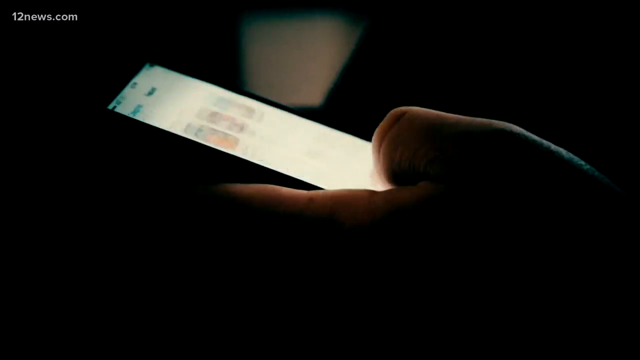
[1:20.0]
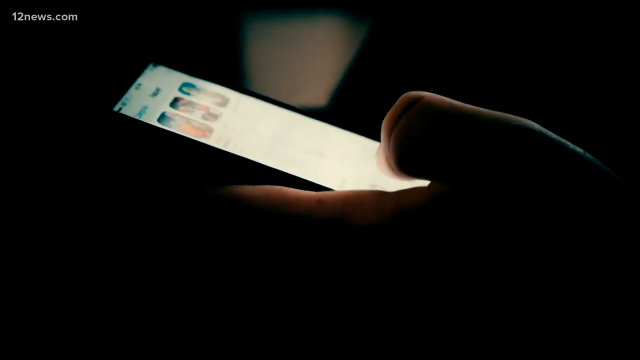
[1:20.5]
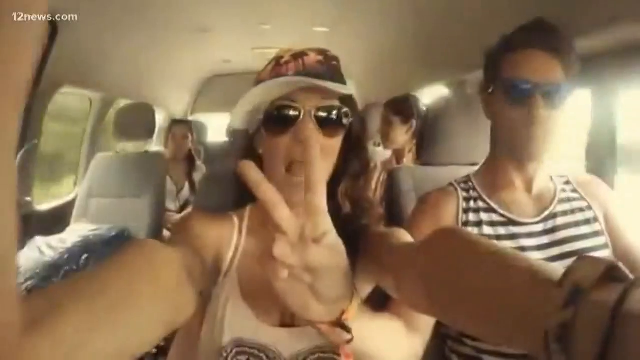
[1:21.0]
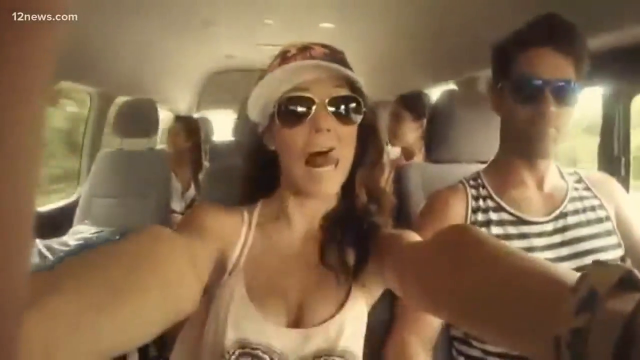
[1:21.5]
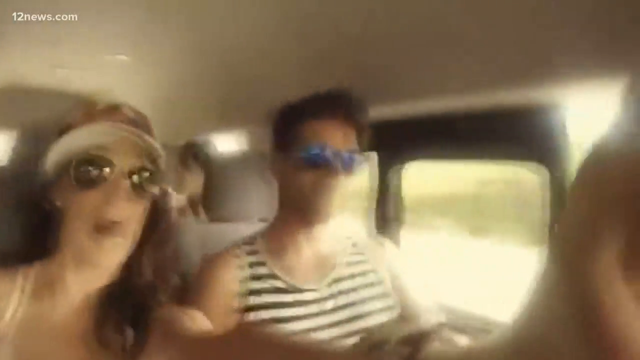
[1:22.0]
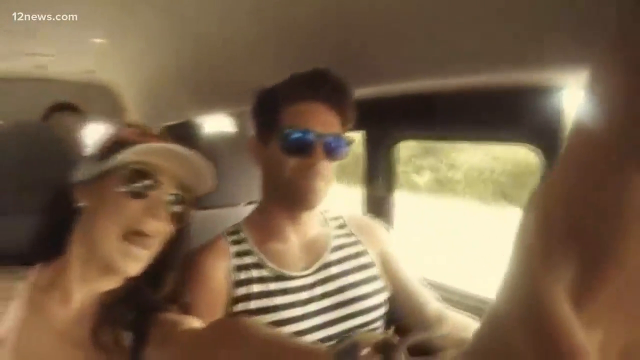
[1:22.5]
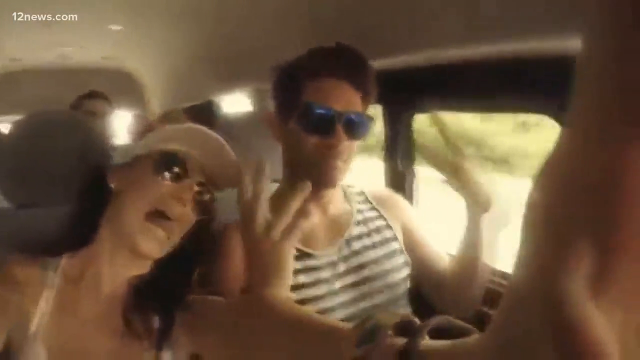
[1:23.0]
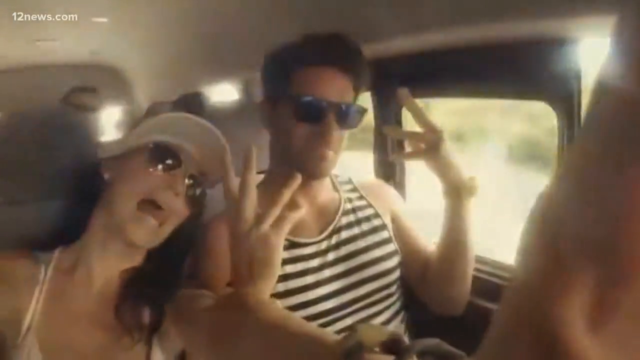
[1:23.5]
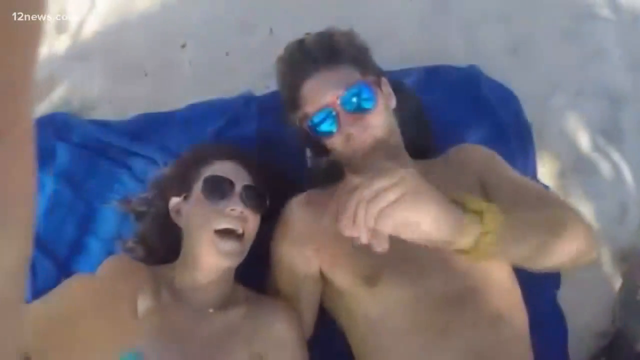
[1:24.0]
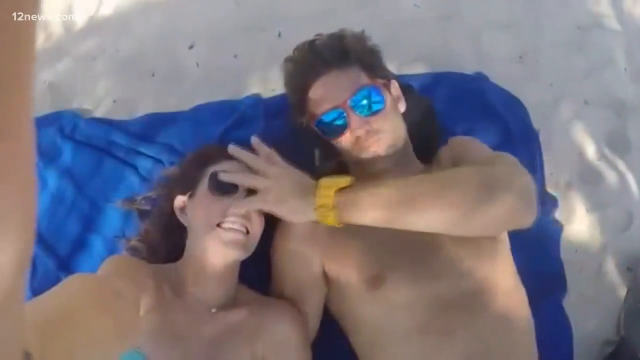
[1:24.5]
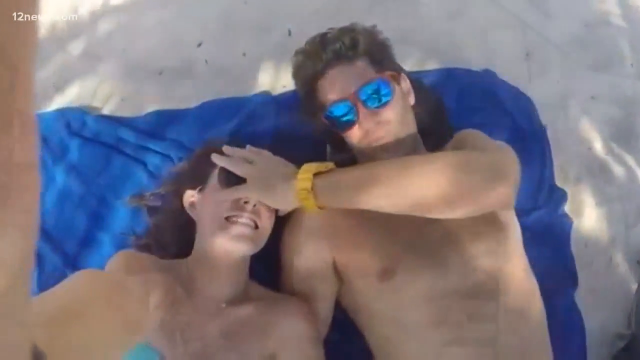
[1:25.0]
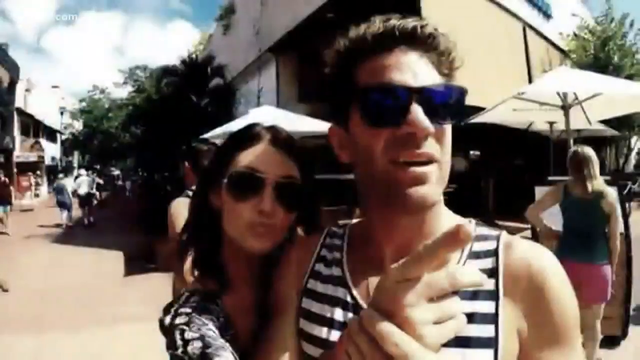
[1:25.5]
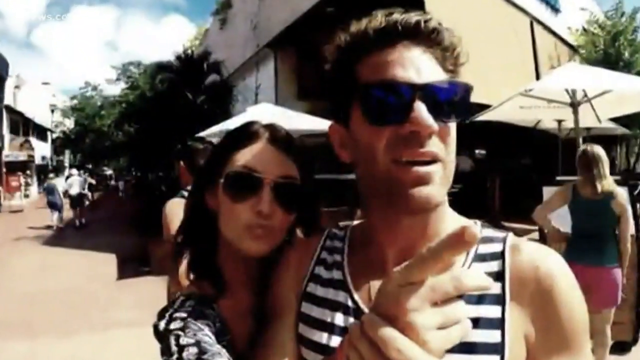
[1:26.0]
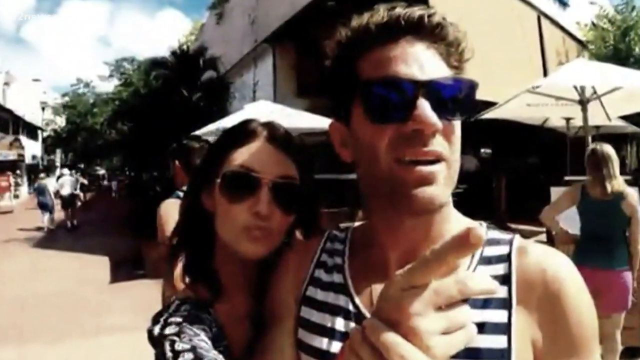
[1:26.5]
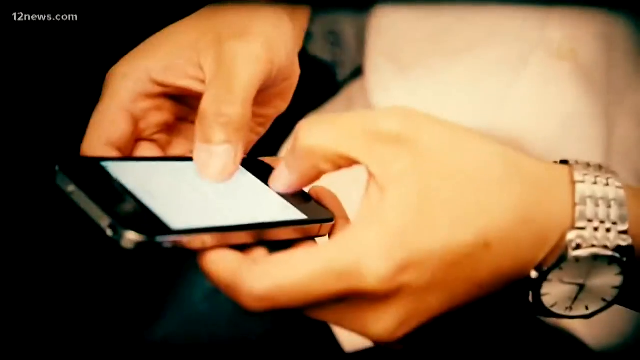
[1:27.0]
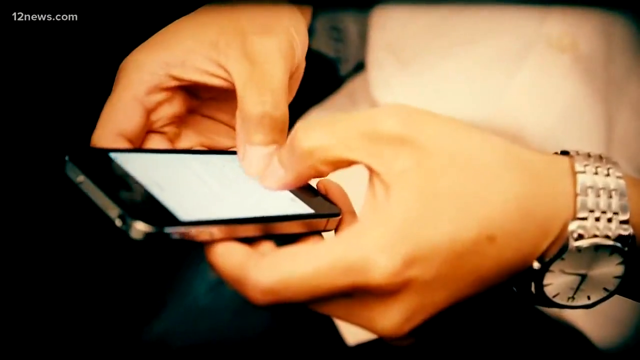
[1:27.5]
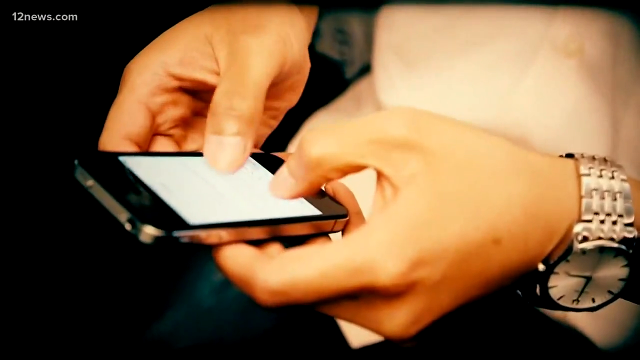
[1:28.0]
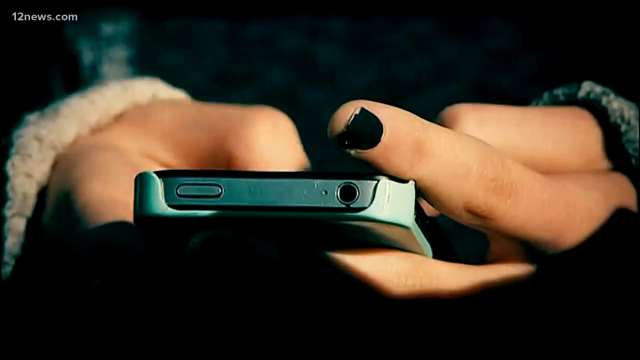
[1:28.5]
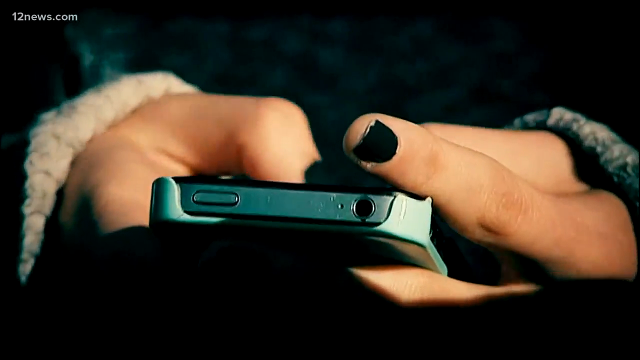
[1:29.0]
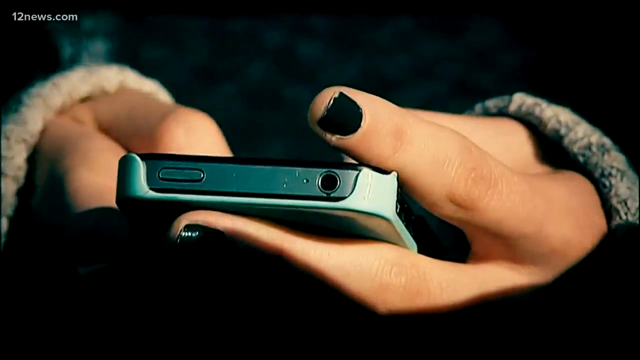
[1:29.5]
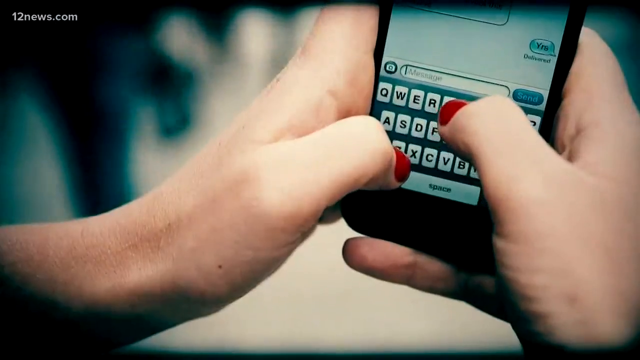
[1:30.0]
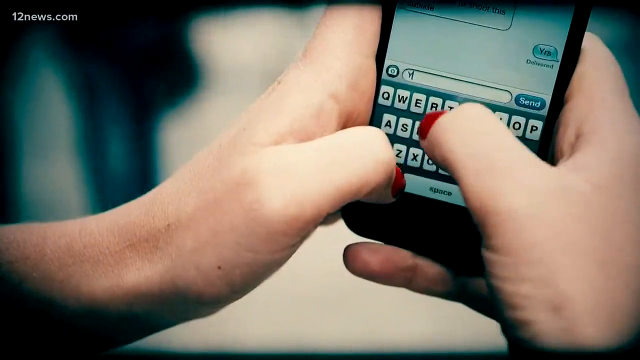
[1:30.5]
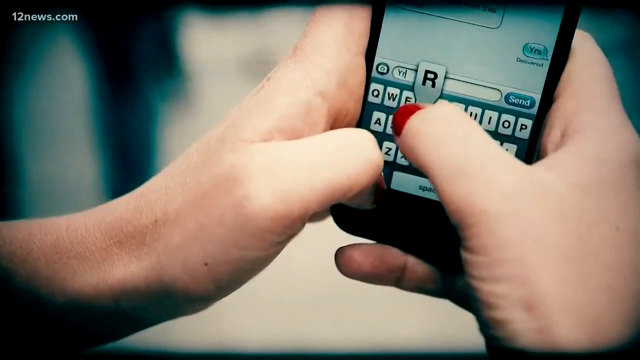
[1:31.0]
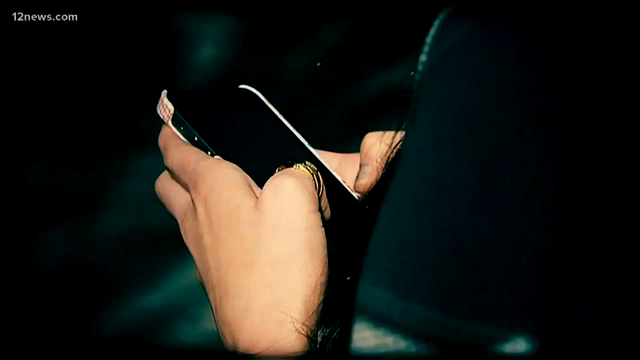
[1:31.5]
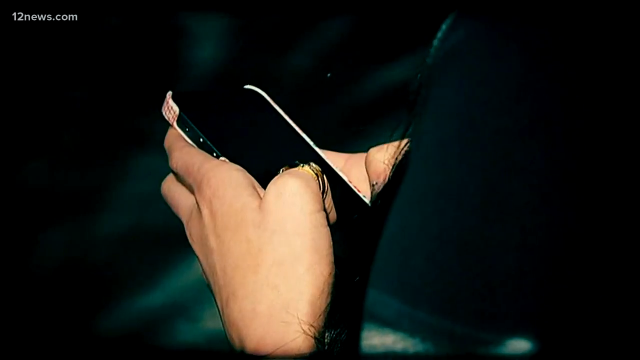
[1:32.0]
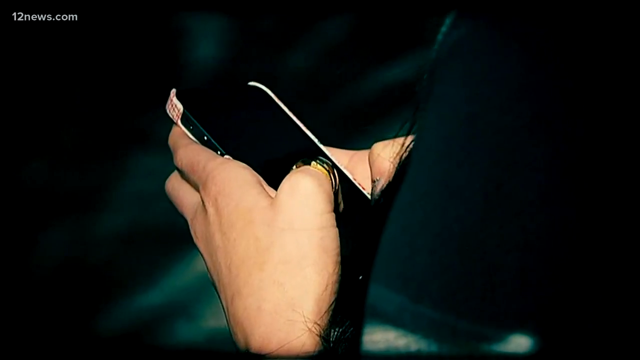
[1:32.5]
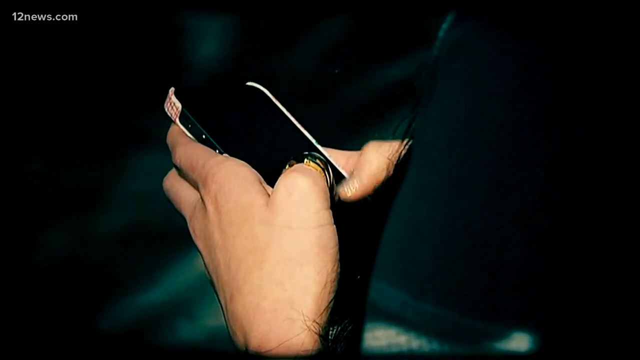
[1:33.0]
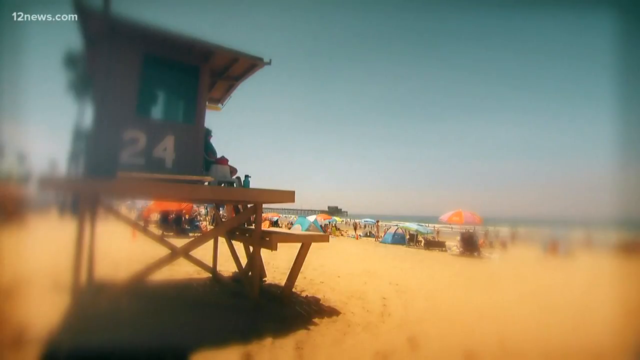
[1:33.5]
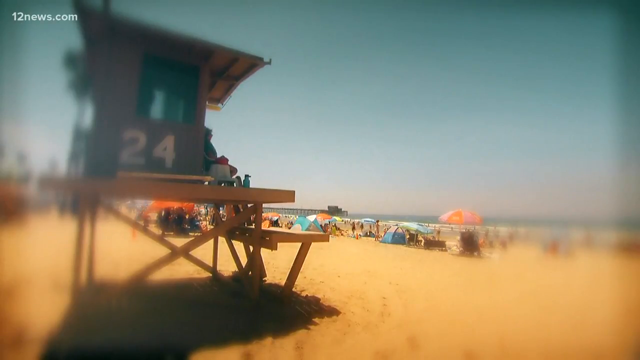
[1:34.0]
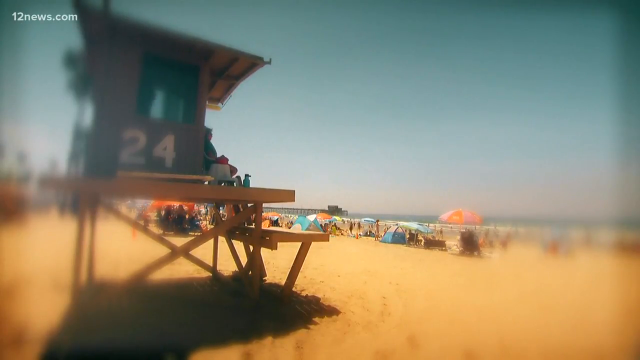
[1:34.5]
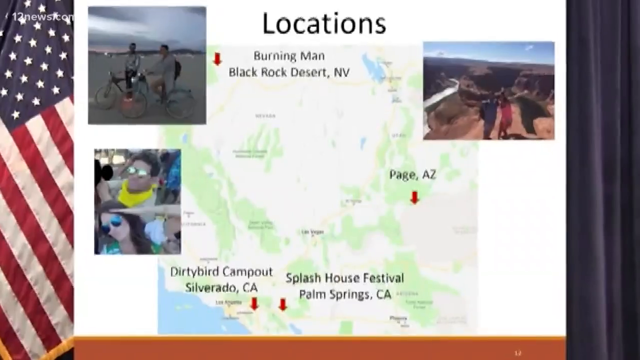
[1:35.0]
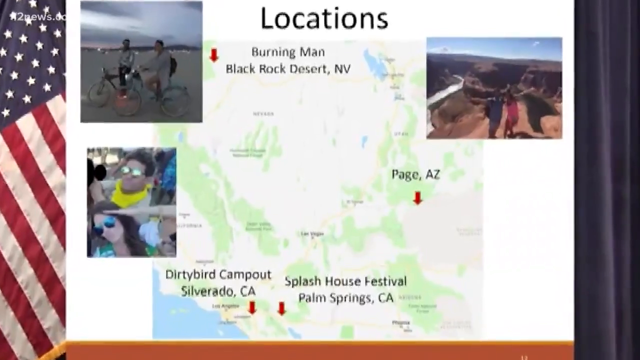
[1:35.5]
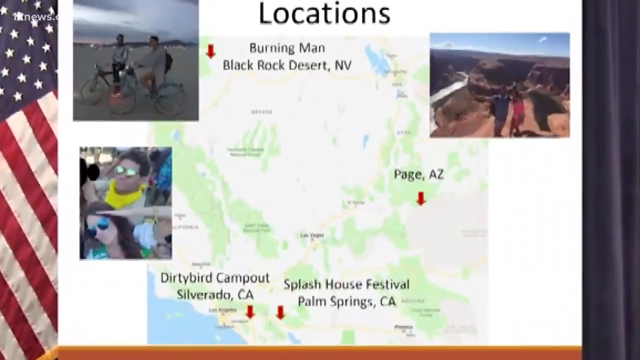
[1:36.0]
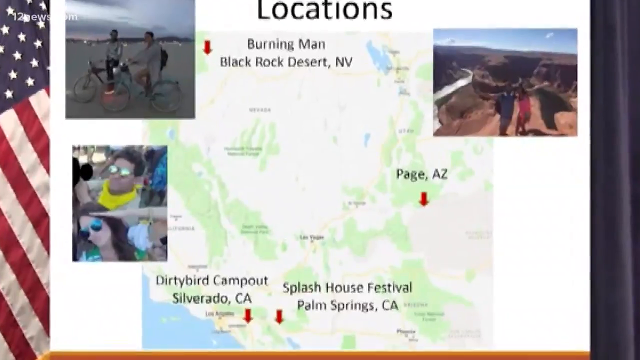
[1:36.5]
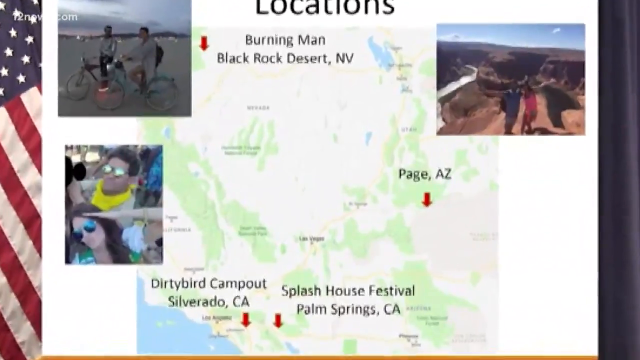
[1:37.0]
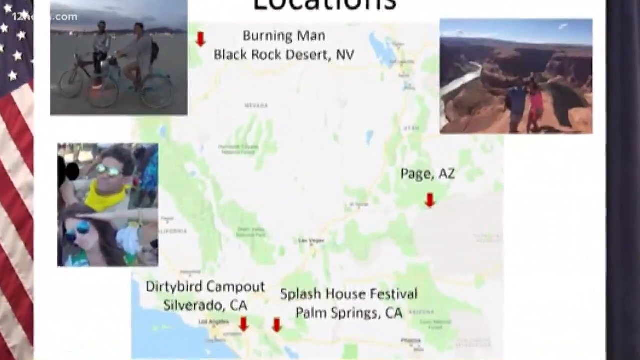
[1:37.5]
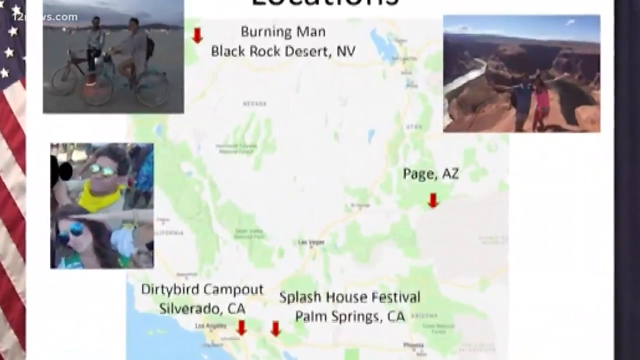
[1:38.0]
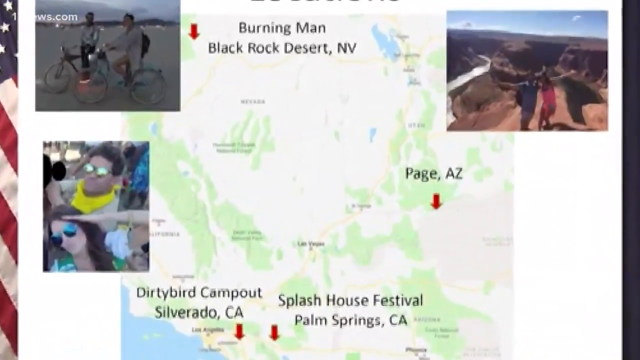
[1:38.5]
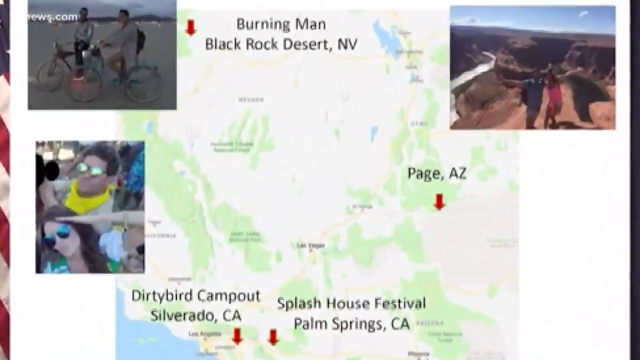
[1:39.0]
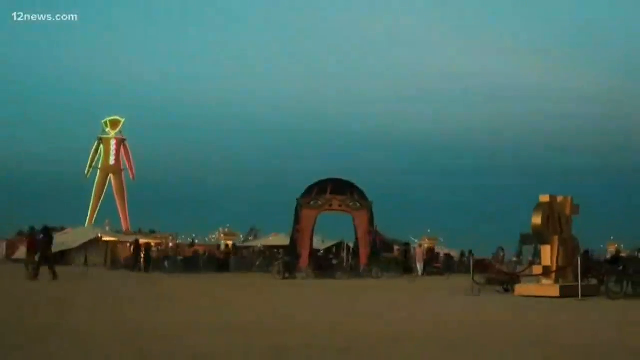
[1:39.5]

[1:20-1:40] The shot starts with a kind of black background, then someone scrolling on a cell phone. More footage shows the man and the woman having fun in a van or a bus. He wears a striped tank top and blue sunglasses; she wears some type of tank top and brown sunglasses. Then they are shown, apparently on the beach, laying on a blue blanket, the man in blue sunglasses and the woman in brown; he has a yellow watch. A still photograph shows the man and woman in the same outfits, somewhere possibly in California, in front of a brown building with palm trees and trees behind. Someone is shown on a cell phone again, a white person with a large watch, texting. One view shows dark fingernail polish, and another shows red fingernail polish. A scene shows a lifeguard tower with the number "24" on it, people on the beach on a sunny day, brown sand, a lot of umbrellas, and some of the water. Then an animation is shown.